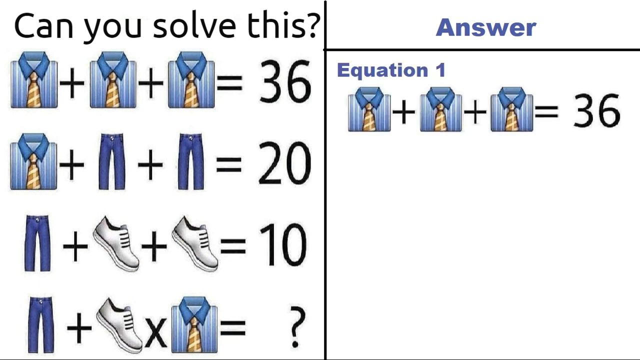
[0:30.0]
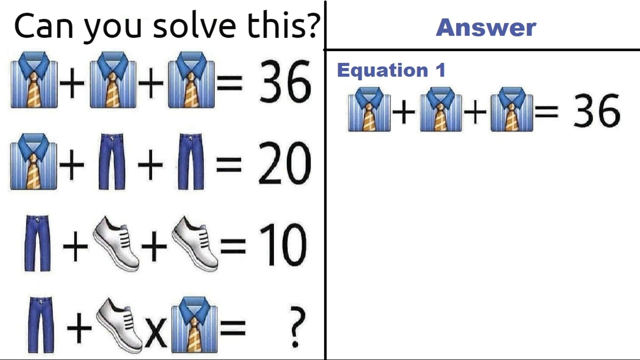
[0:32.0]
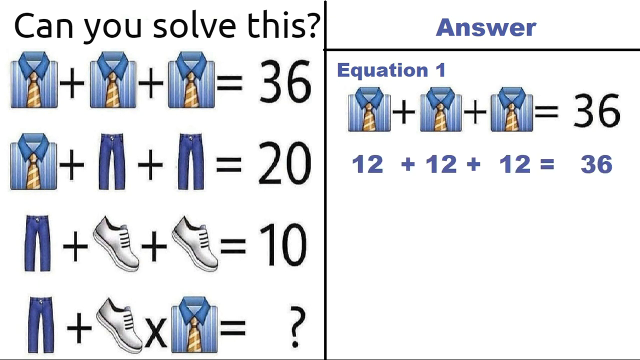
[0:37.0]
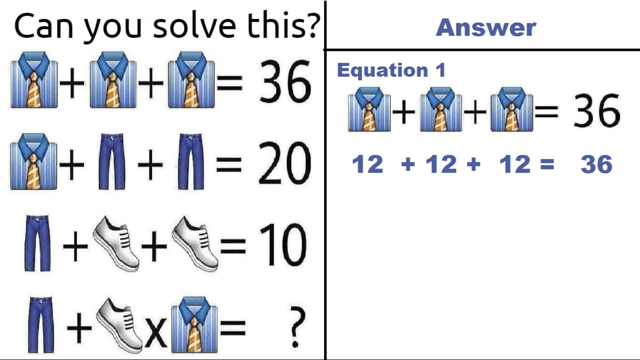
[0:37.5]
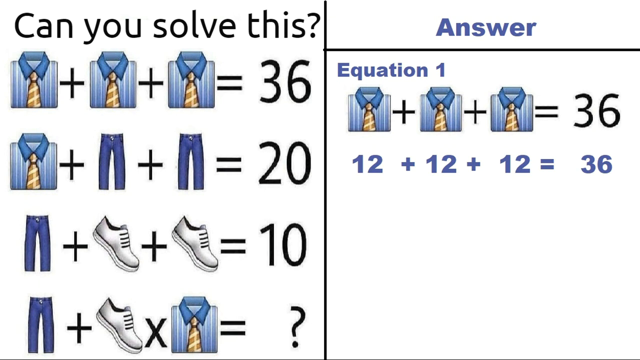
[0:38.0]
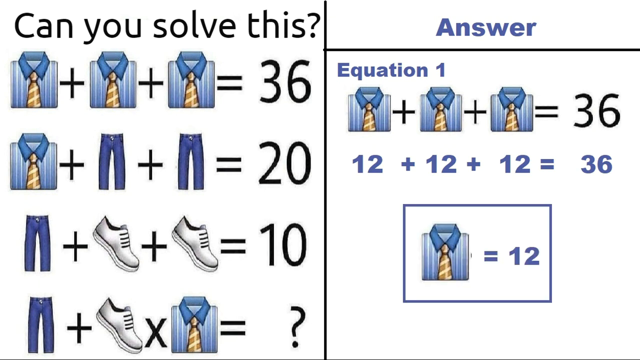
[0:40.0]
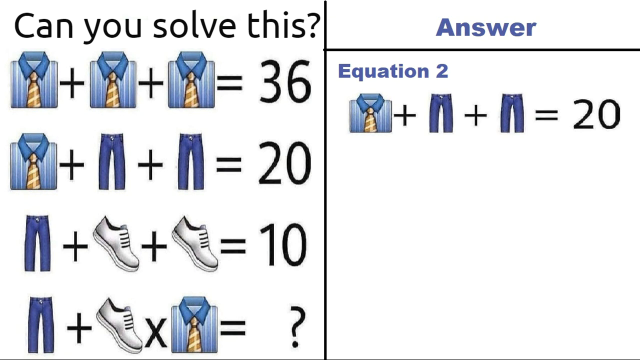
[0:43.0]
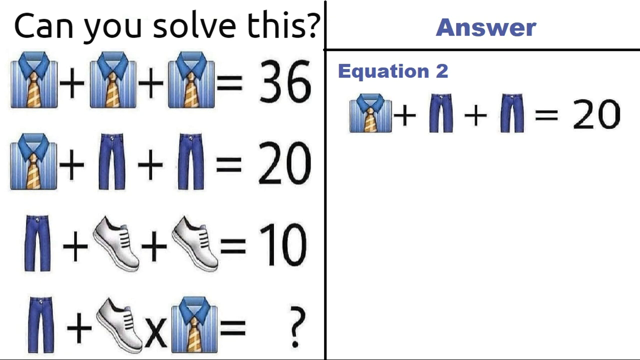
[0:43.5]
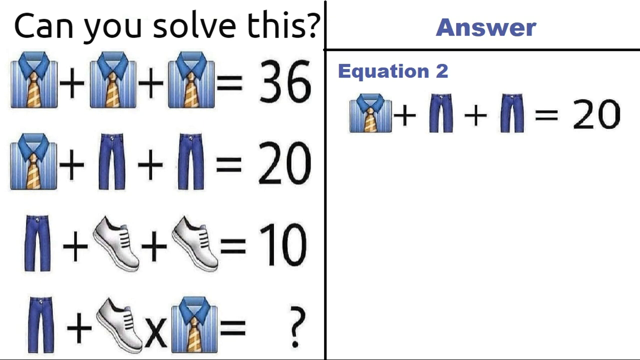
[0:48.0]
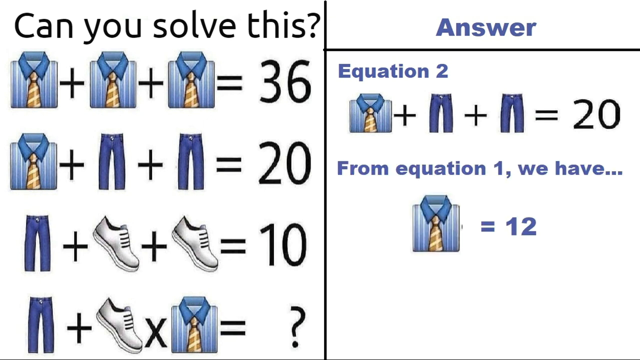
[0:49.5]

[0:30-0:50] The four equations remain on the left side, one on top of the other, beneath the heading "Can you solve this?" in black: one striped shirt plus one striped shirt plus one striped shirt equals 36; one striped shirt plus one pants plus one pants equals 20; one pants plus one shoe plus one shoe equals 10; and one pants plus one shoe times one striped shirt equals question mark. On the right side, the first equation is highlighted. After about seven seconds, the line "12 plus 12 plus 12 equals 36" appears, with all numbers and symbols in blue. Beneath it, in a larger font, it shows that the striped shirt equals 12, outlined by a blue-bordered square. The solved equation then disappears and is replaced by the header Equation 2, in blue, followed by the equation striped shirt plus pants plus pants equals 20.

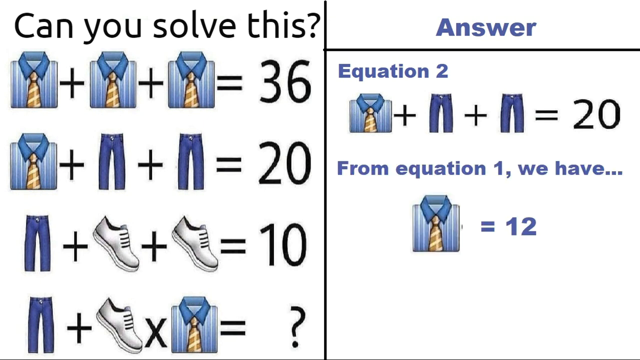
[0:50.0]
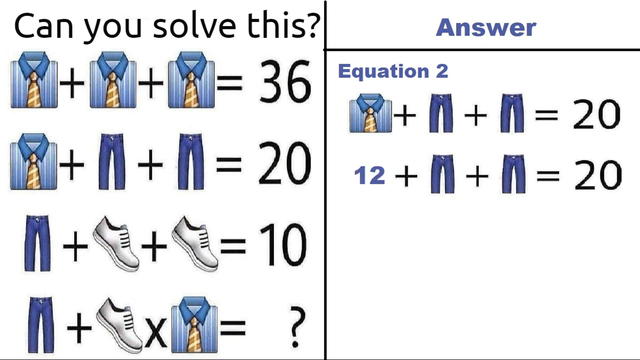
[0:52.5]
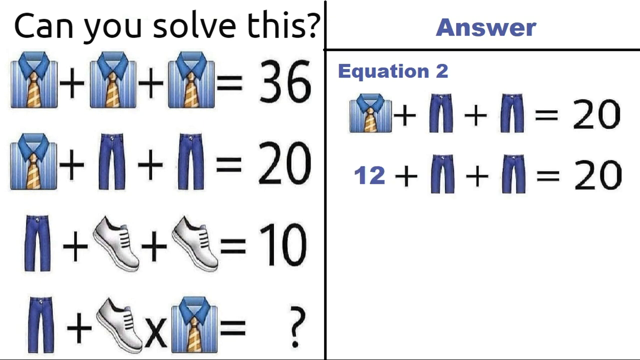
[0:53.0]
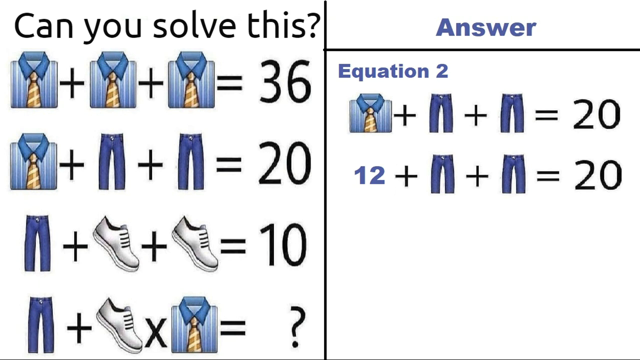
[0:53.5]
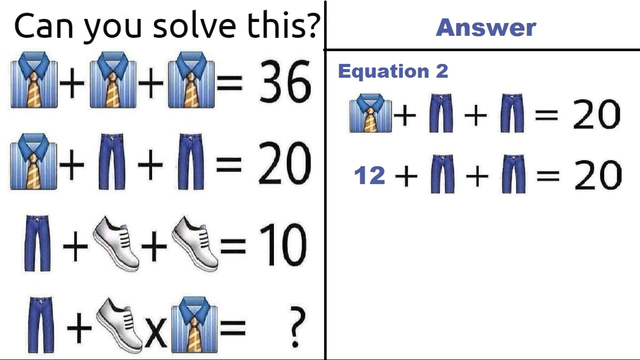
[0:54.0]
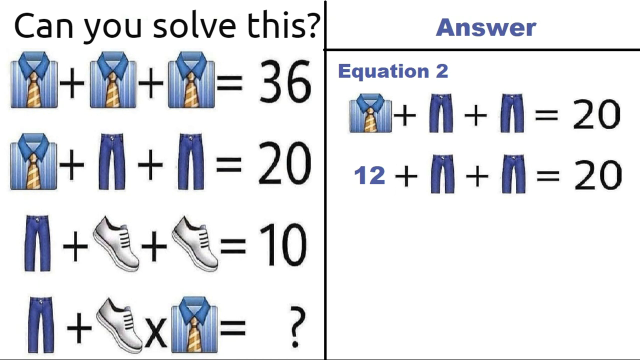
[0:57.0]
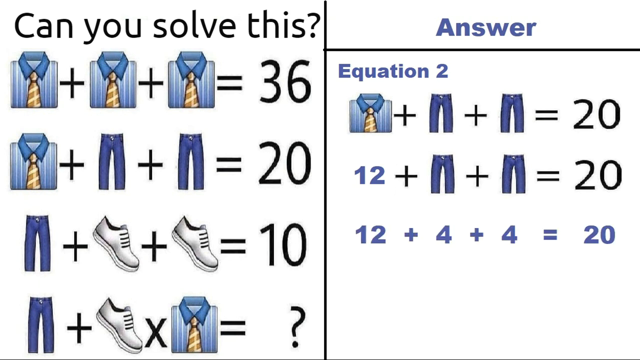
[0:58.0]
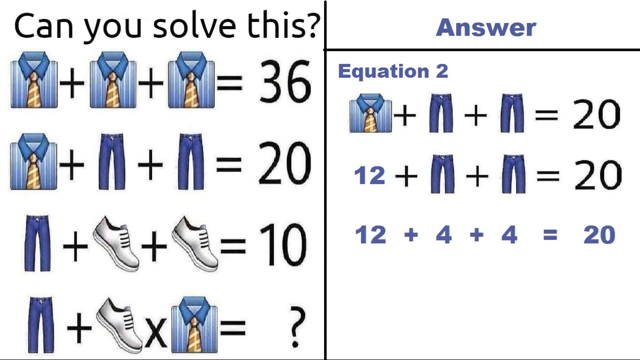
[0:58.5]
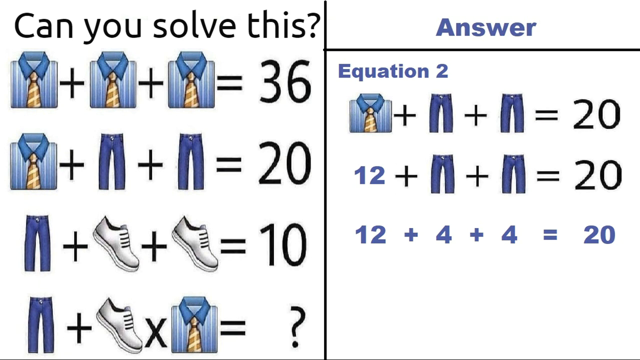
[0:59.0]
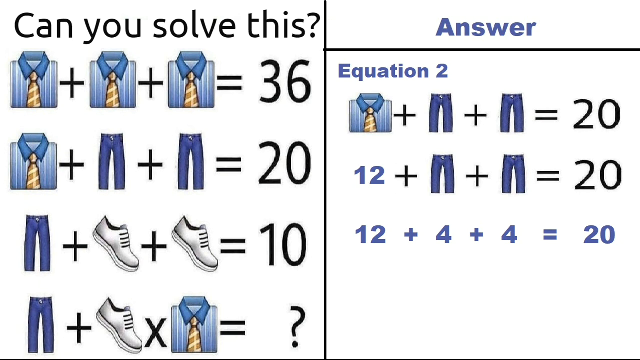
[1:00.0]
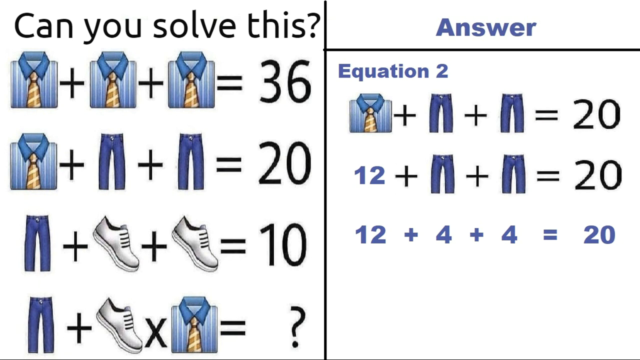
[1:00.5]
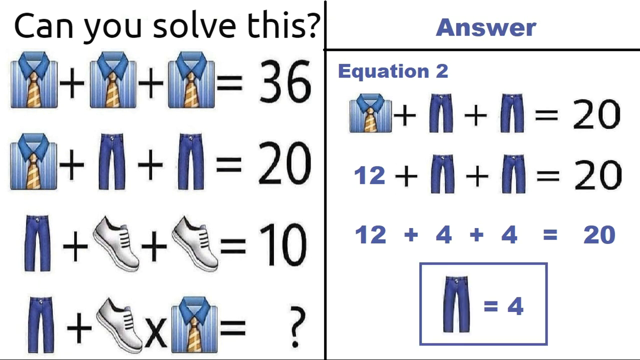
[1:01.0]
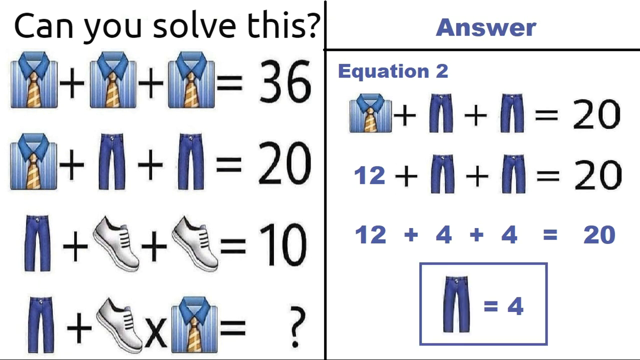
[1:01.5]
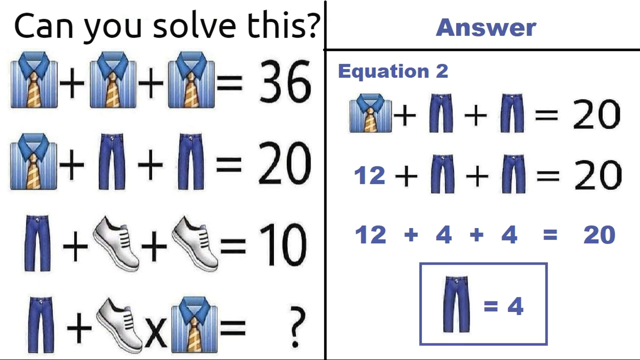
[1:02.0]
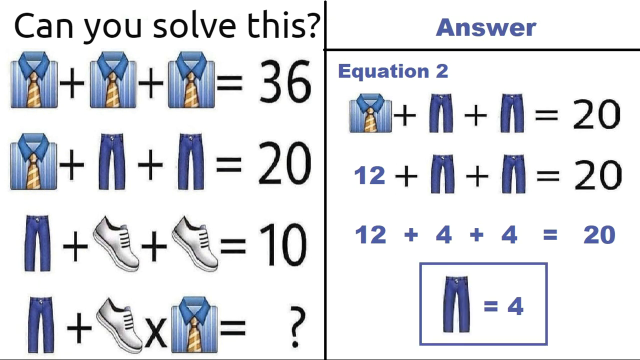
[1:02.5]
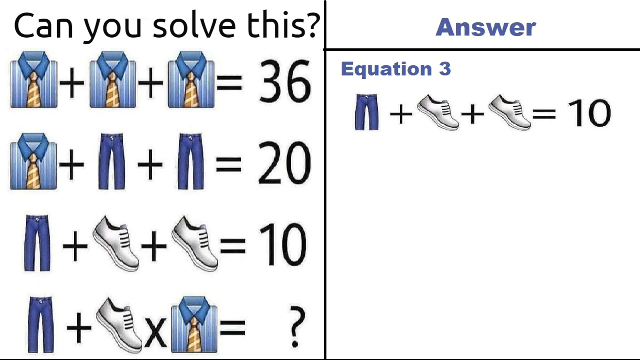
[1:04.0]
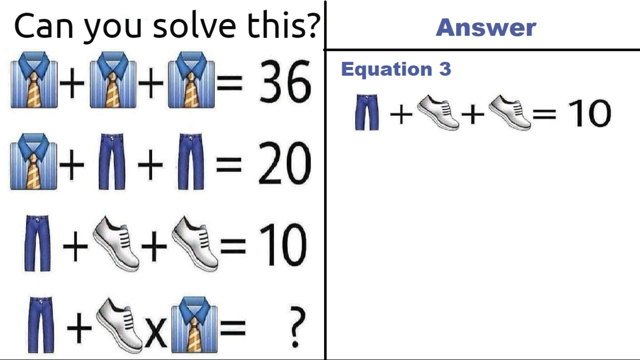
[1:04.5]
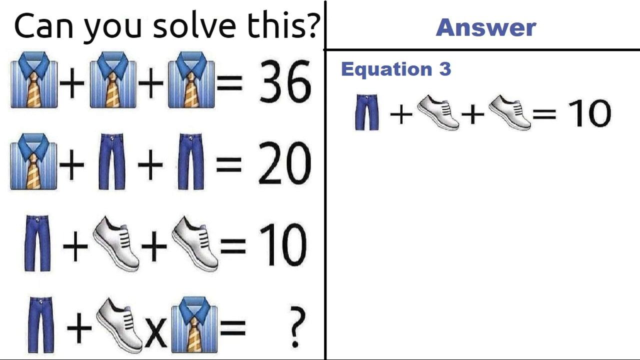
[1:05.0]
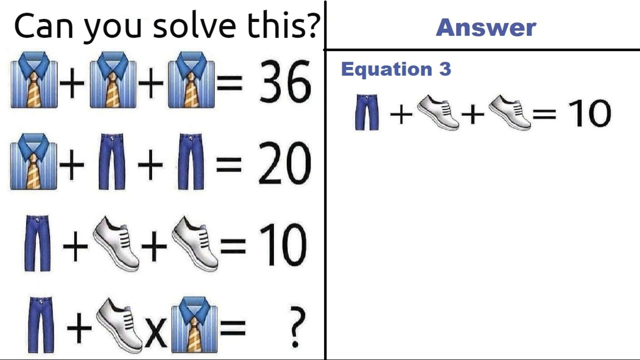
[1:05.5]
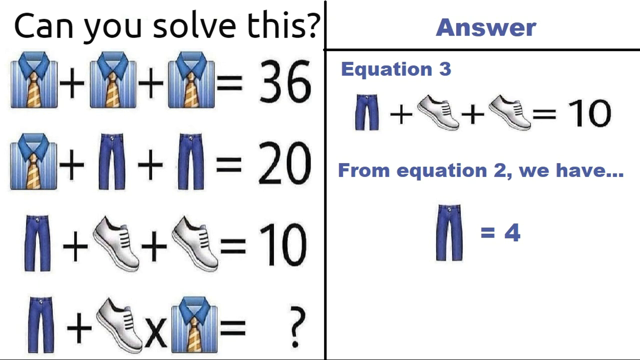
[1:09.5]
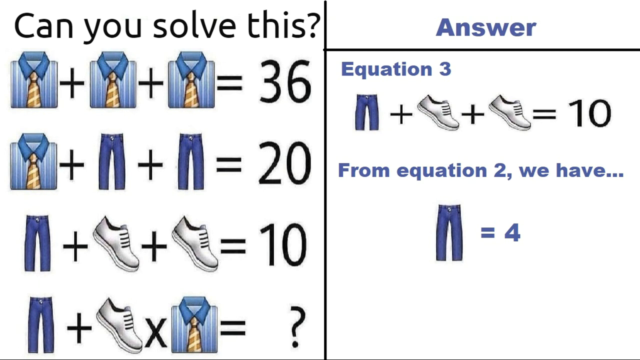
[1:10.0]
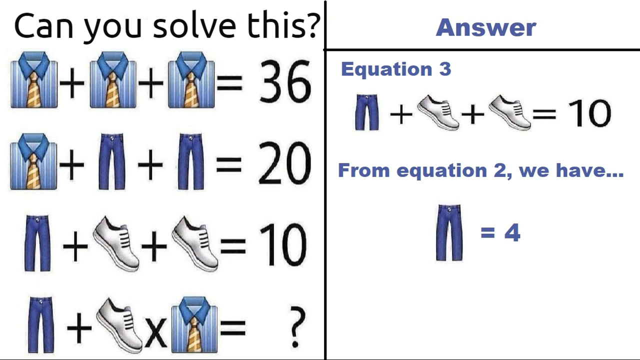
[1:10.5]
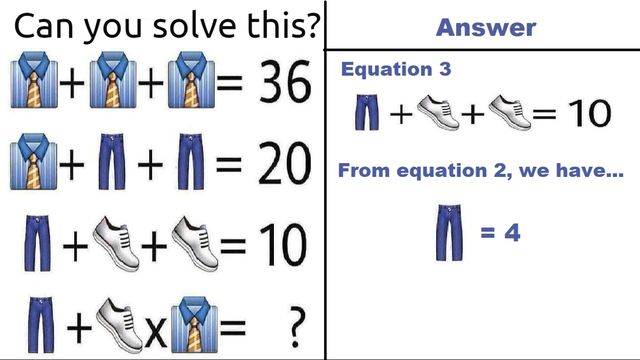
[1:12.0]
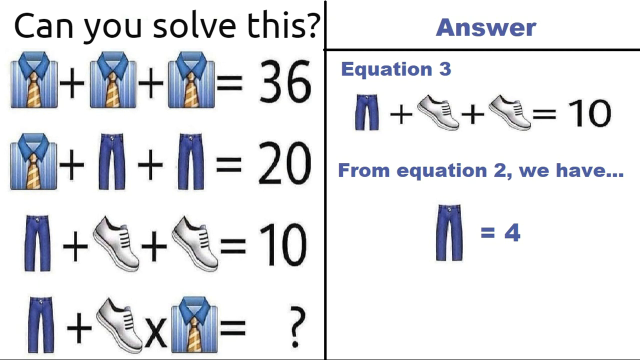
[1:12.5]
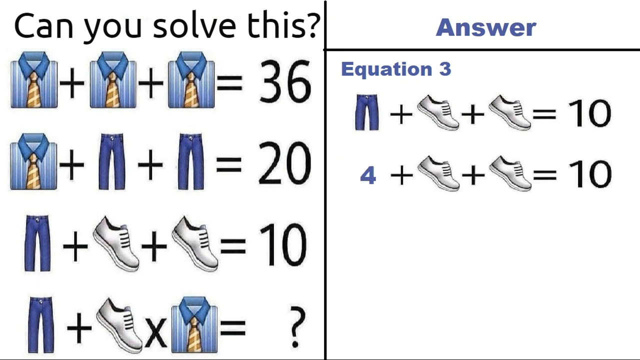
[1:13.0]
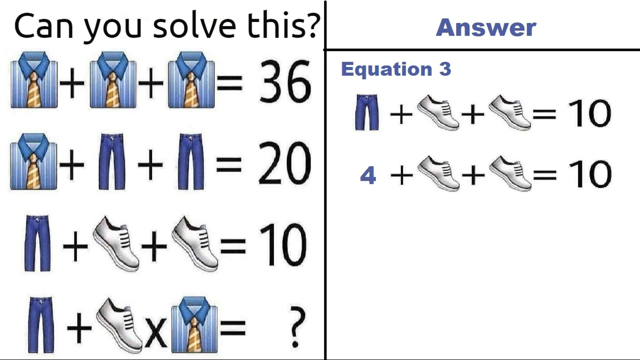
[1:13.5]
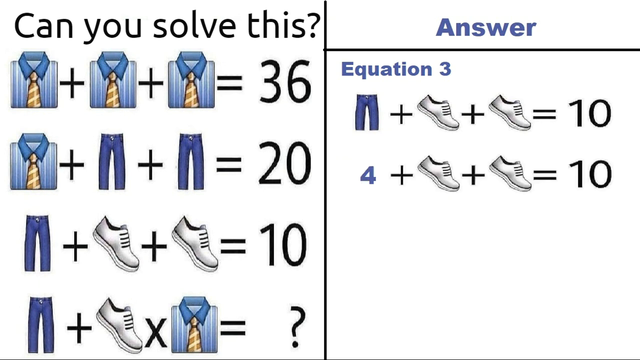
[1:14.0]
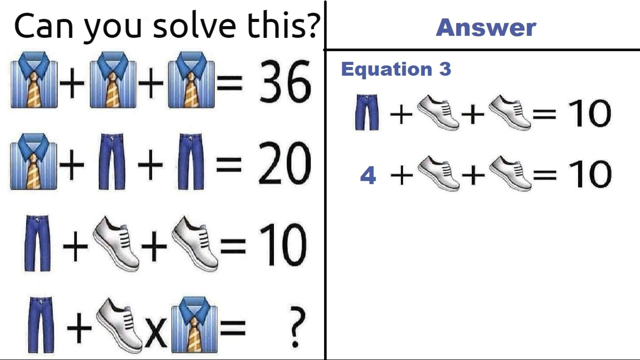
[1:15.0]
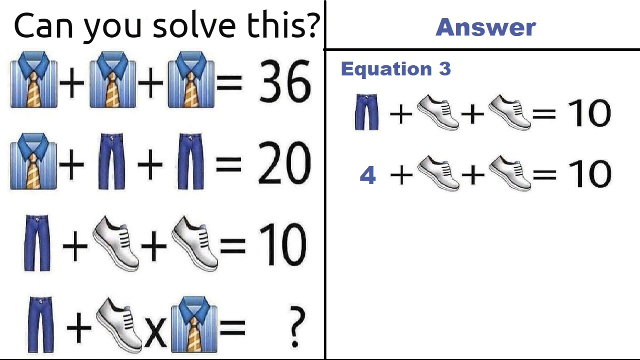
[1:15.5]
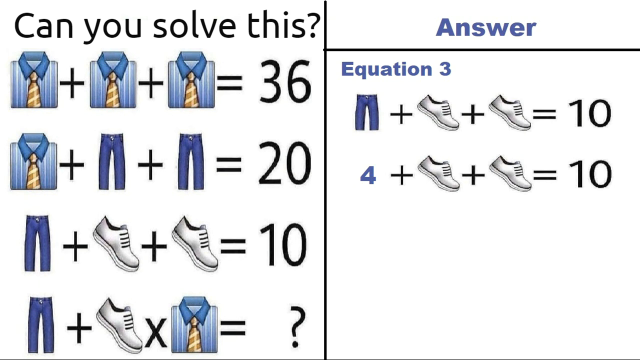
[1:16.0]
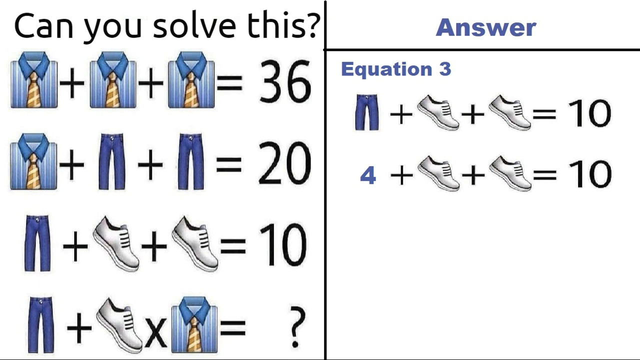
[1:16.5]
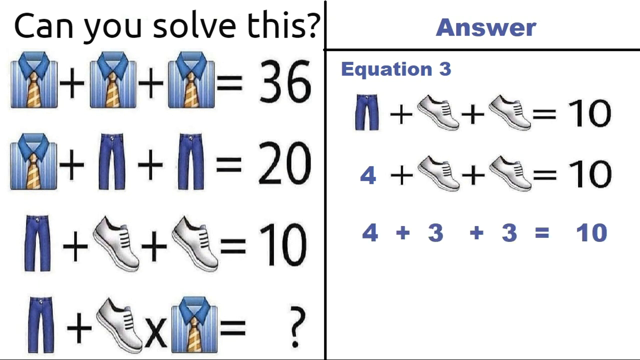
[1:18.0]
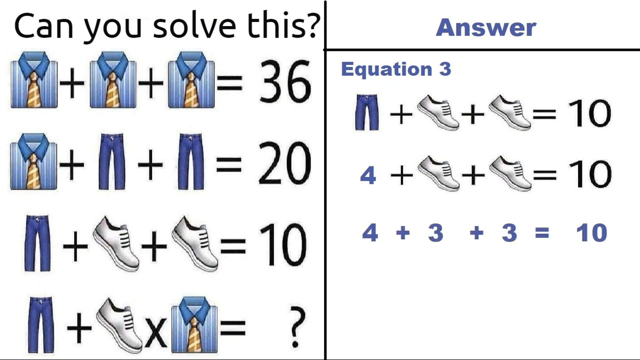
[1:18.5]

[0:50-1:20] About two seconds in, the explanation disappears and is replaced by the equation 12 plus one pants plus one pants equals 20, with the 12 in dark blue. Shortly afterwards another equation appears in which the two pants are replaced by the number four, reading 12 plus four plus four equals 20; the letters, numbers and symbols are all in dark blue. Below it, in a white square bordered by blue lines, it shows pants equals four. The screen then switches to equation three, one pants plus one shoe plus one shoe equals 10, with, below, one pants equals four from equation two. All the letters are in dark blue. That explanation is replaced by the equation four plus shoe plus shoe equals 10, with the four in dark blue. Beneath it a new equation appears reading four plus three plus three equals 10, entirely in navy blue.